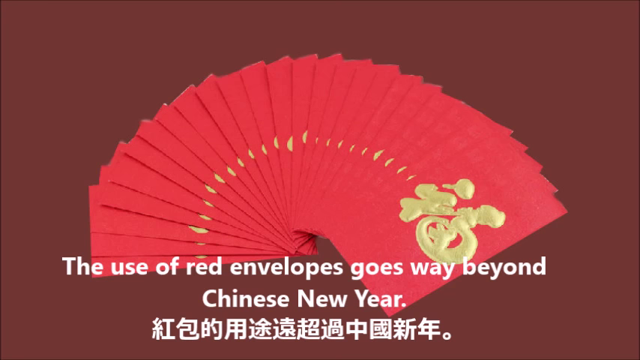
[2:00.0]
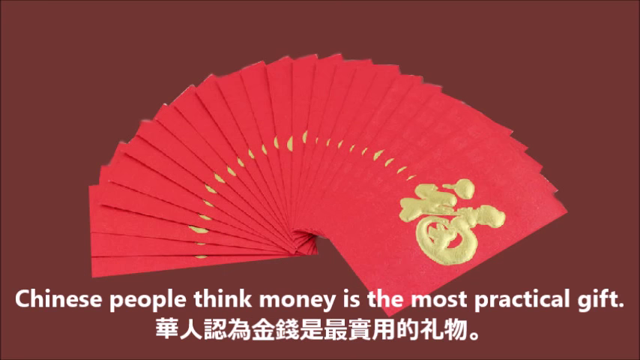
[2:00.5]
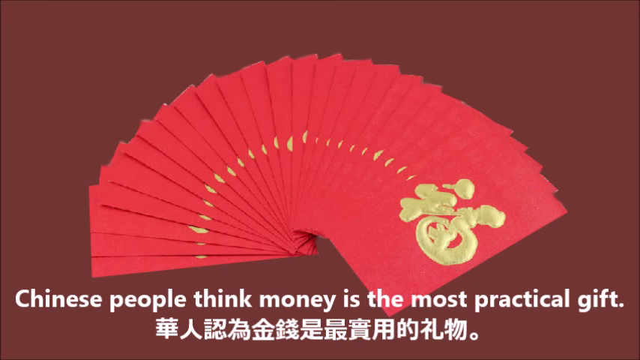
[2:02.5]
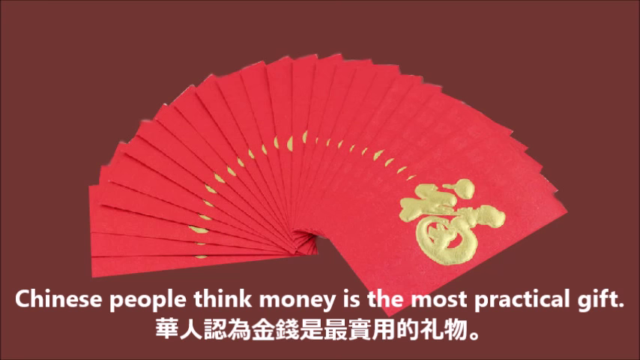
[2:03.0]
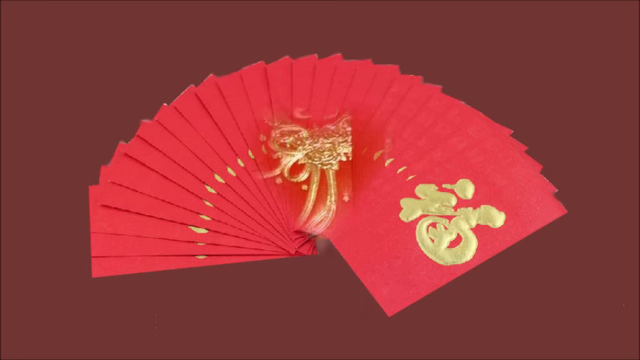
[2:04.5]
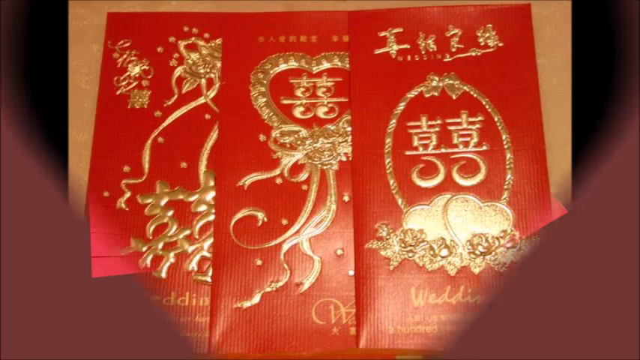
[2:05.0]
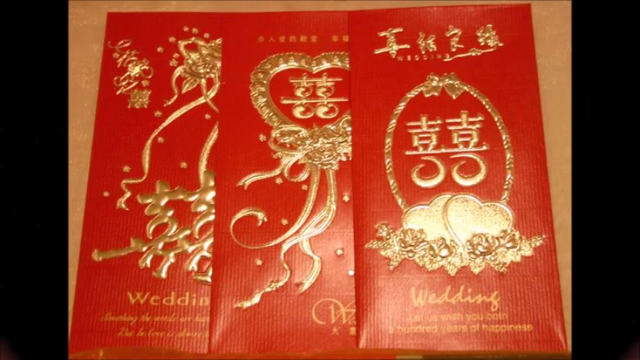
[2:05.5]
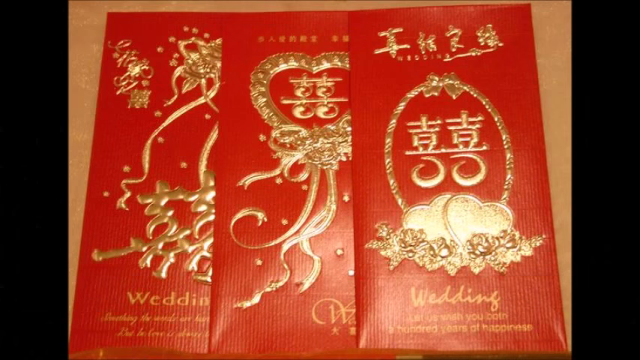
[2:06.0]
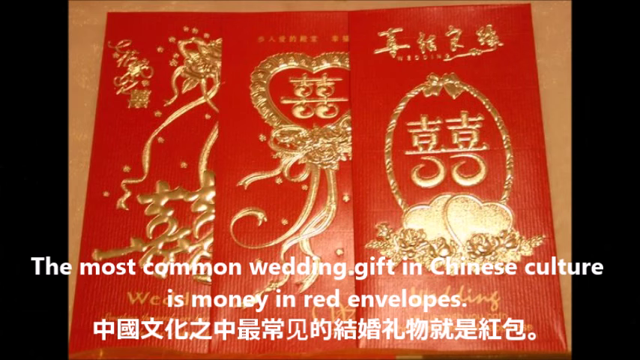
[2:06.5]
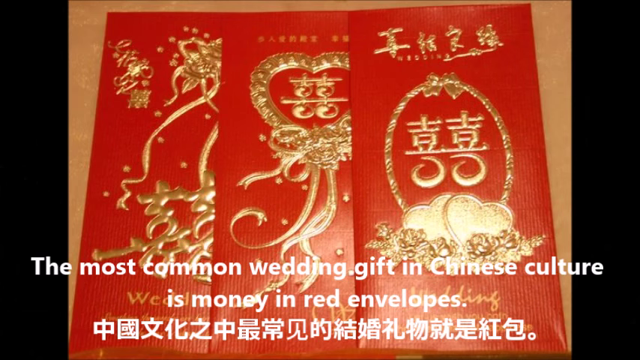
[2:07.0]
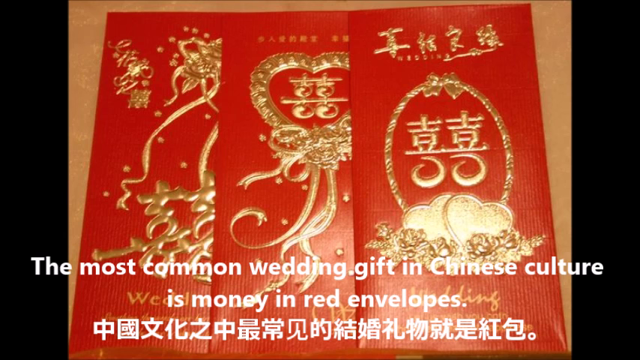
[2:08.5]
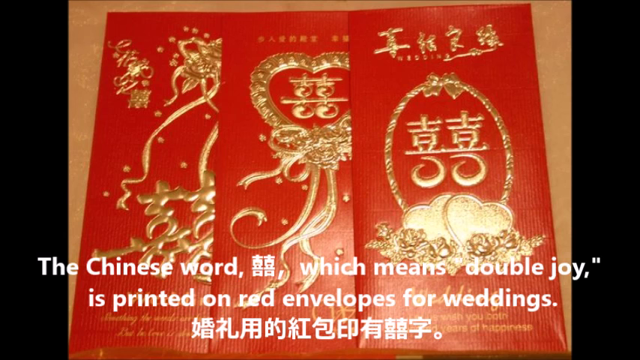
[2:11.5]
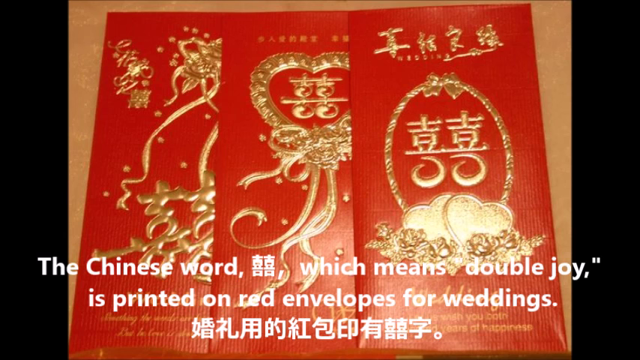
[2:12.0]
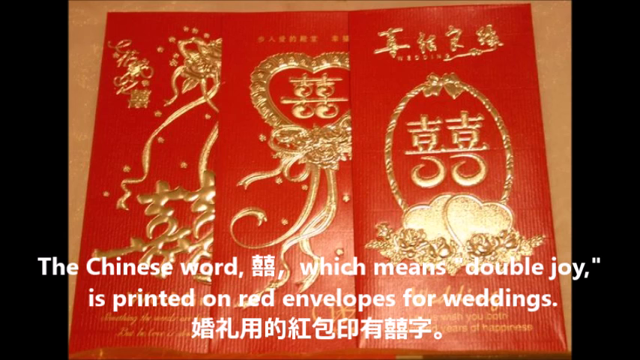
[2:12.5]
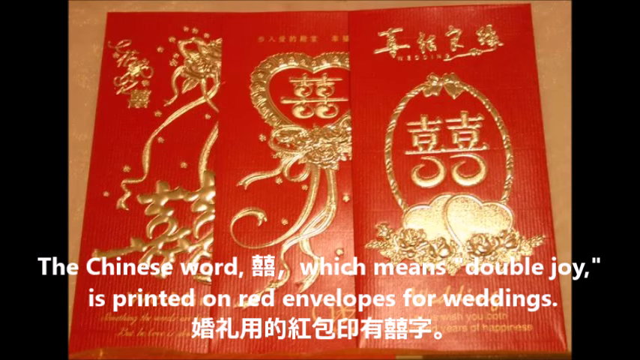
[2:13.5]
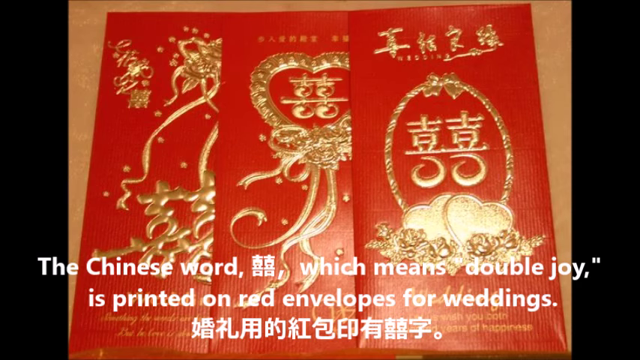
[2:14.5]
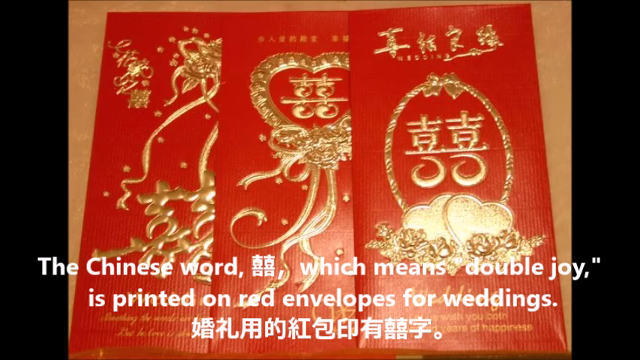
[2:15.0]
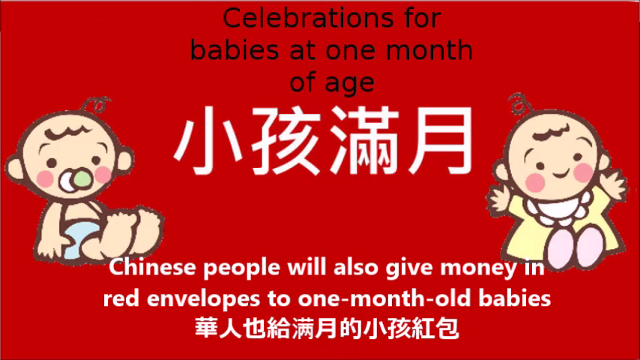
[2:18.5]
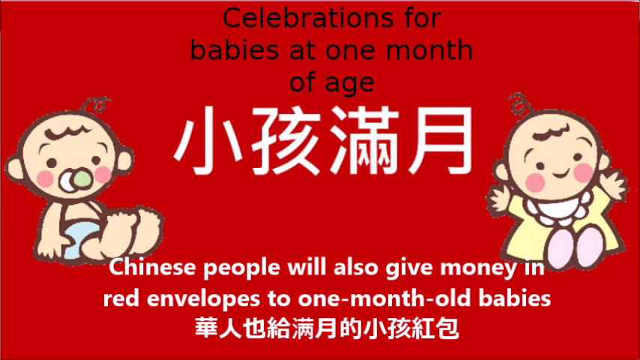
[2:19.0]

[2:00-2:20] White text reads "Chinese people think money is the most practical gift. The most common wedding gift in Chinese culture is money in red envelopes". An image shows three envelopes lying on a table, each with an illustration or bold design. The one on the right has a rounded oval shape with a word in the middle and two hearts below it with decorations around them; the middle one also has a heart with a bow coming off it; the left one has lots of bold inscription. The Chinese word meaning double joy, printed on red envelopes for weddings, is visible on all three envelopes. The screen then turns red, with black text at the top reading "celebrations for babies at one month of age" and white text reading "Chinese people will also give money in red envelopes to one month old babies". There are illustrations of babies on the left and right-hand sides of the screen.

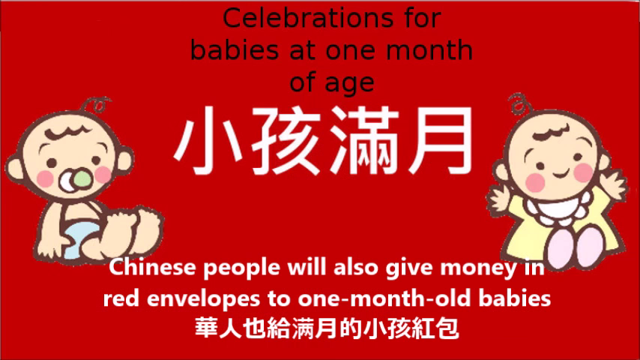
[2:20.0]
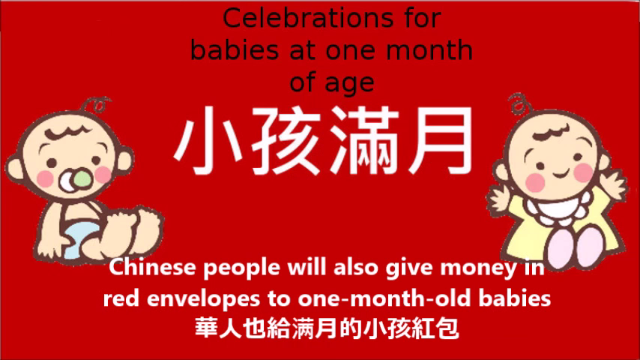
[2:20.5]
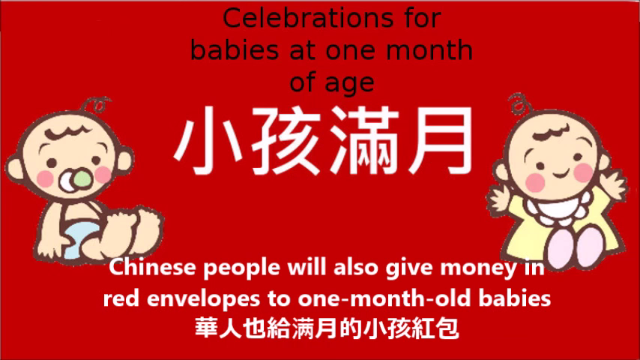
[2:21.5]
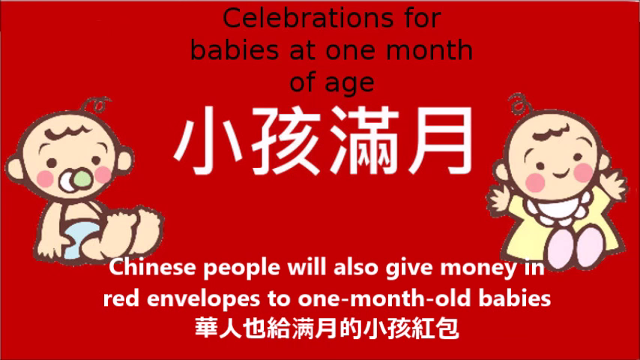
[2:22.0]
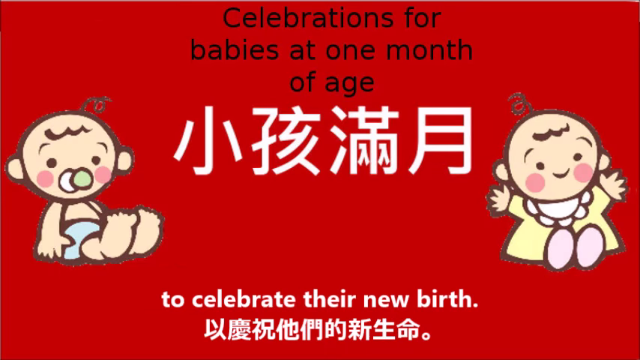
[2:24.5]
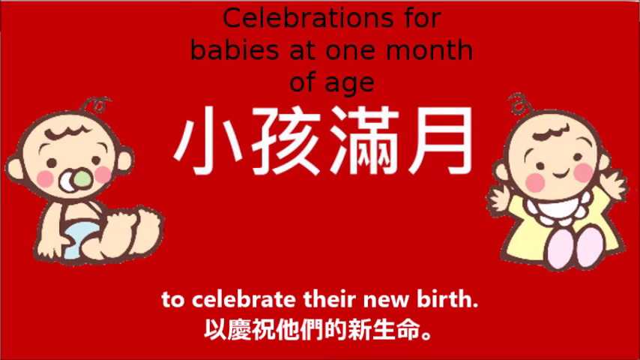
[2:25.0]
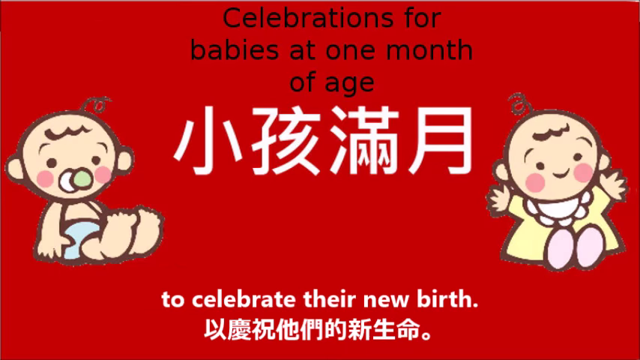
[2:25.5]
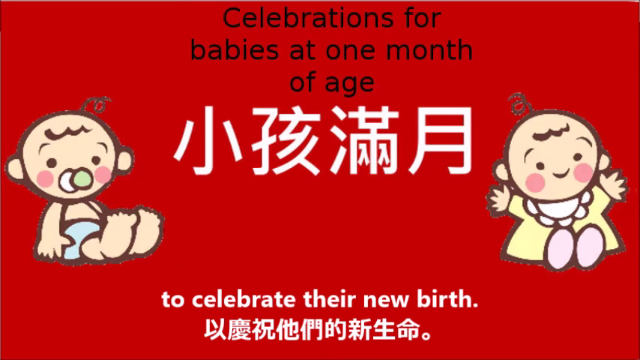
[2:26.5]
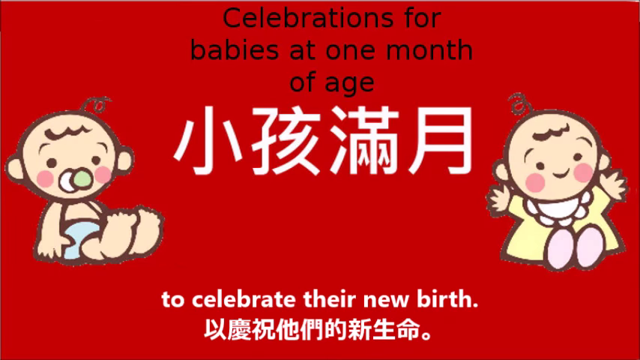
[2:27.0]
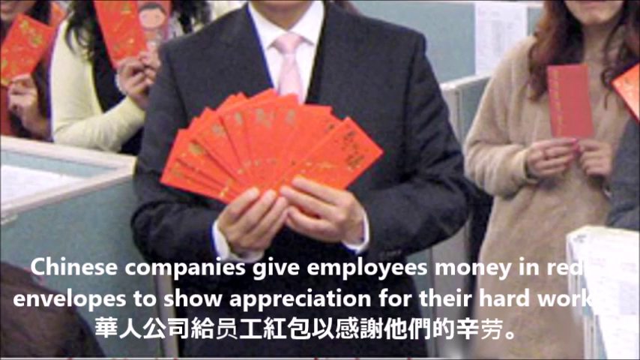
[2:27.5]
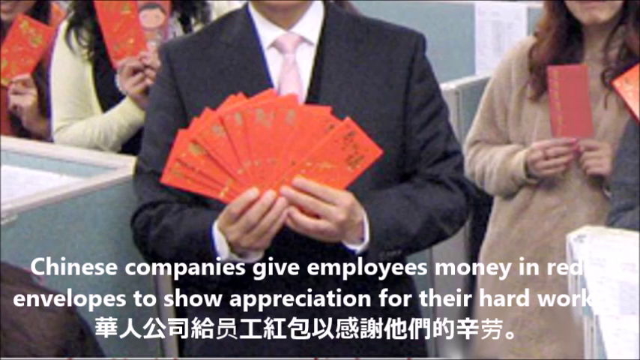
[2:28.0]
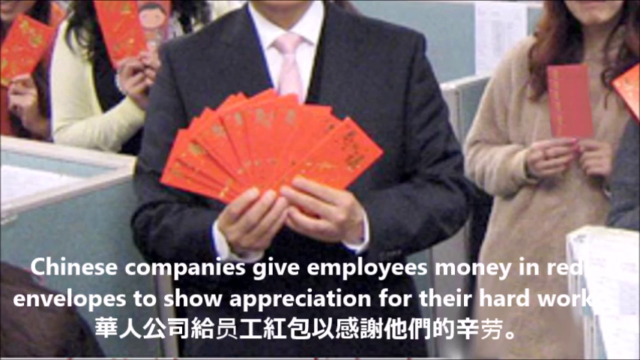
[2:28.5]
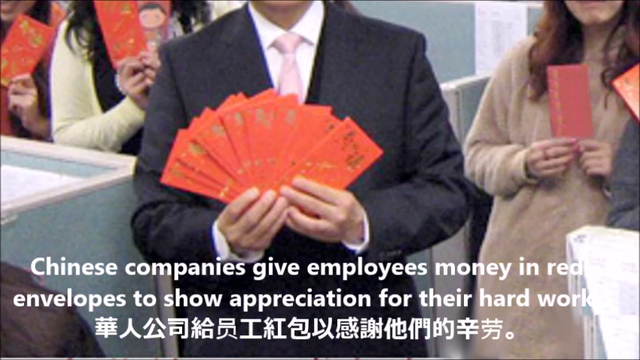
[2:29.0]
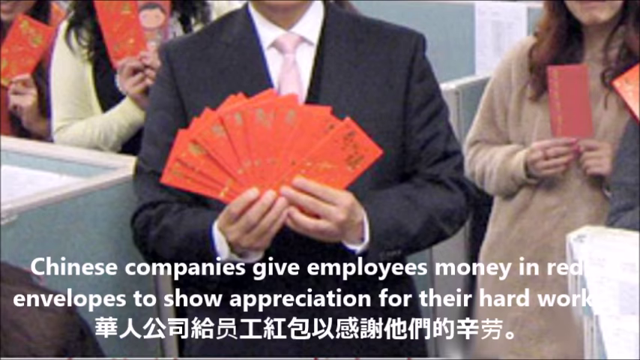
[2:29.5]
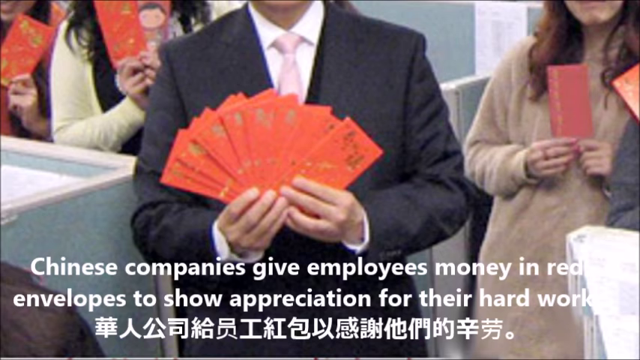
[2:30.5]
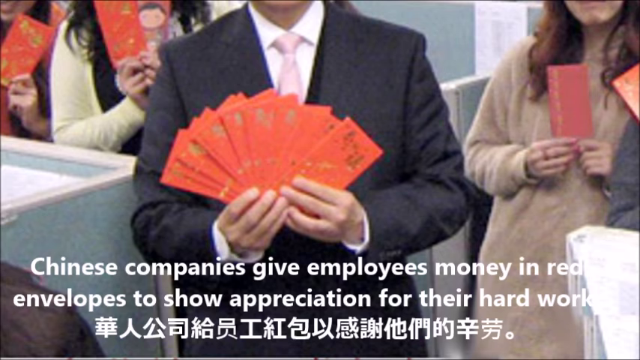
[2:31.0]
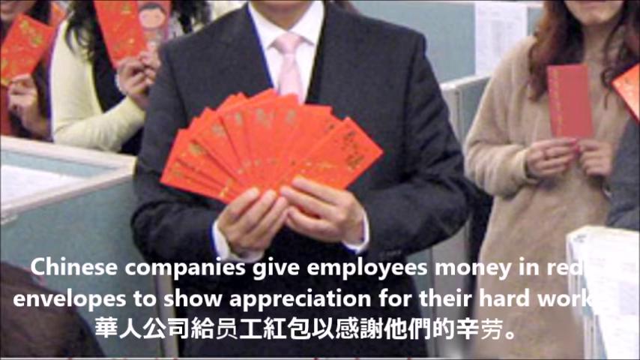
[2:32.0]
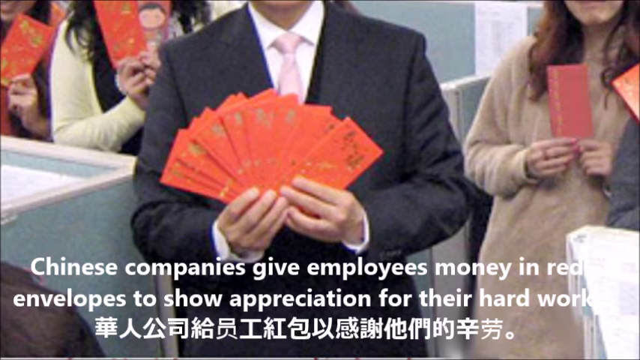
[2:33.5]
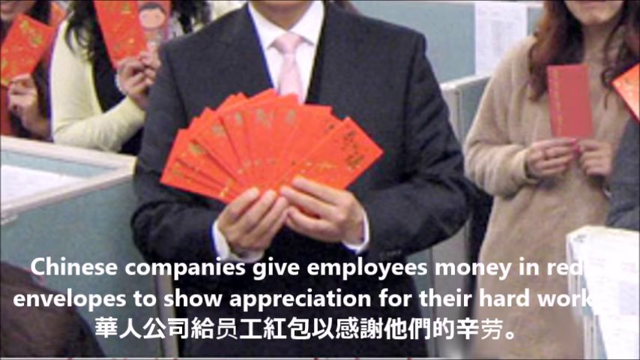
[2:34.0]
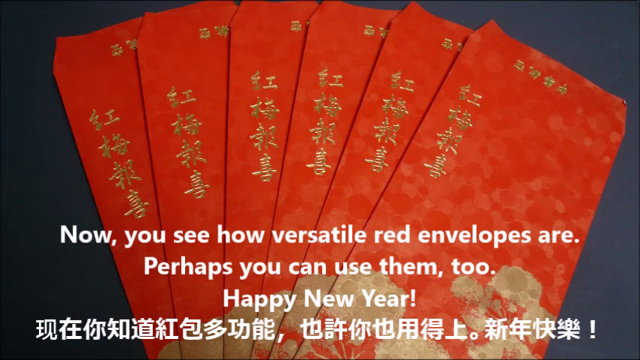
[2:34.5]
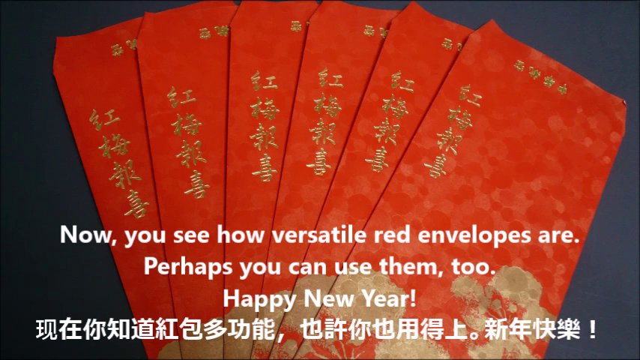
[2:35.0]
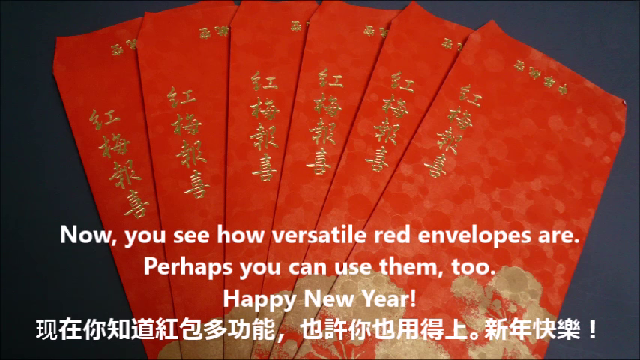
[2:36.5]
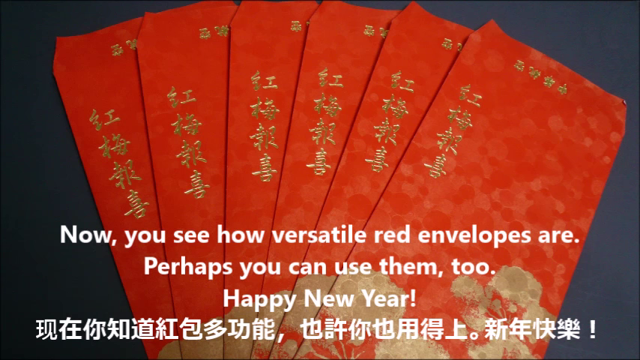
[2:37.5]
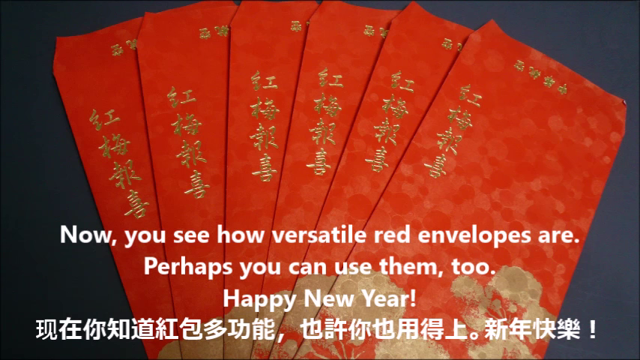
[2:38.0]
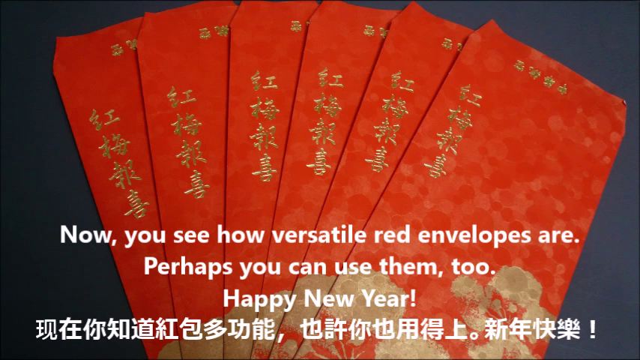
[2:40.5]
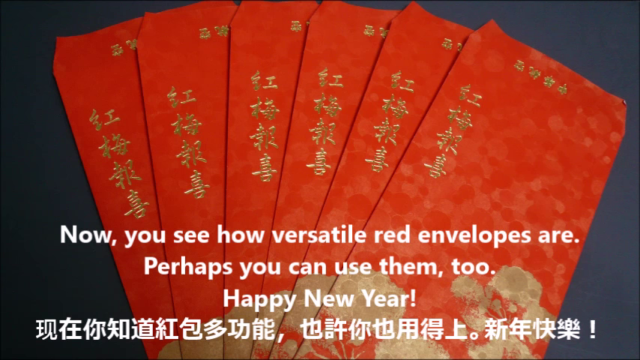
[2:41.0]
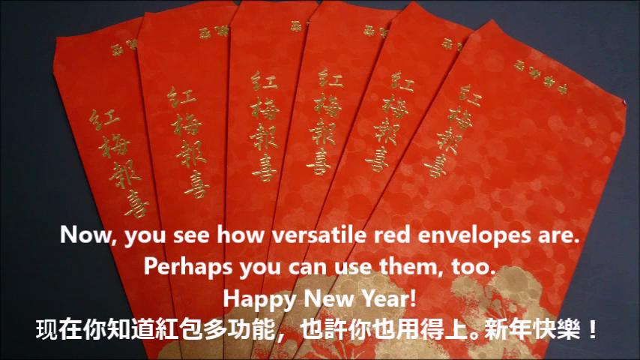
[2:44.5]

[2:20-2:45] Illustrations of babies appear on either side of the screen. The baby on the left has a green dummy in and wears blue shorts; the baby on the right has big cheeks and a yellow top with a white scalloped neck. Black text reads "celebrations for babies at one month of age", along with text reading "The Chinese people also give money in red envelopes to one month old babies to celebrate their new birth", and there is Chinese text in the middle. Video footage then shows a man in a black jacket, white shirt and pink tie holding red envelopes in his hand, with white text reading "Chinese companies give employees money in red envelopes to show appreciation for their hard work". Employees in the background are holding up their red envelopes. Finally, six red envelopes with different bold illustrations are shown on a table, with white text reading "now you see how versatile red envelopes are, perhaps you could use them too. Happy New Year".